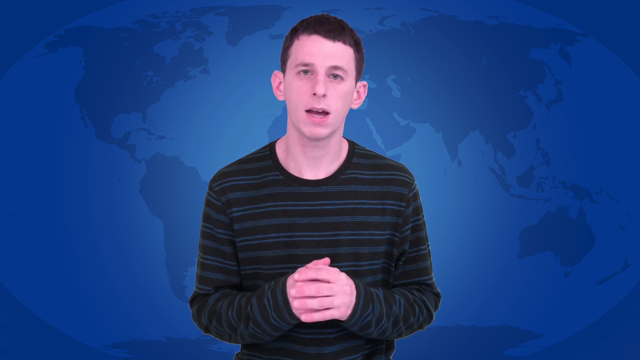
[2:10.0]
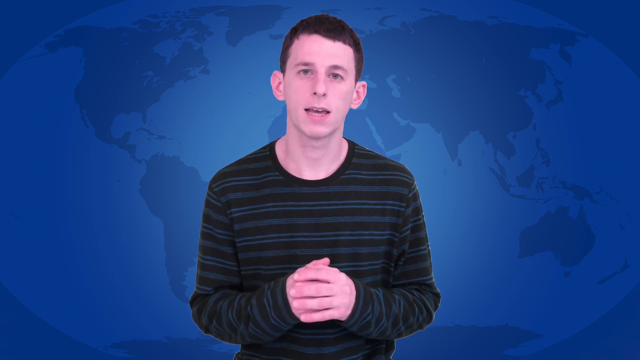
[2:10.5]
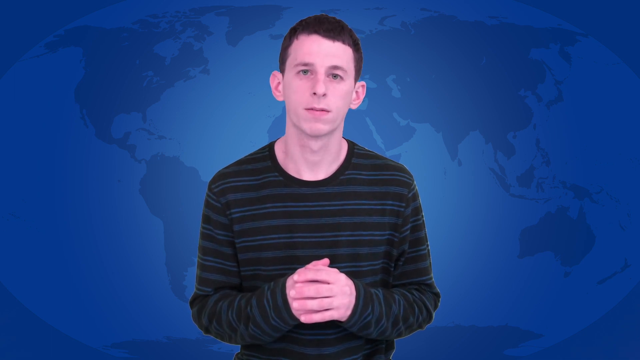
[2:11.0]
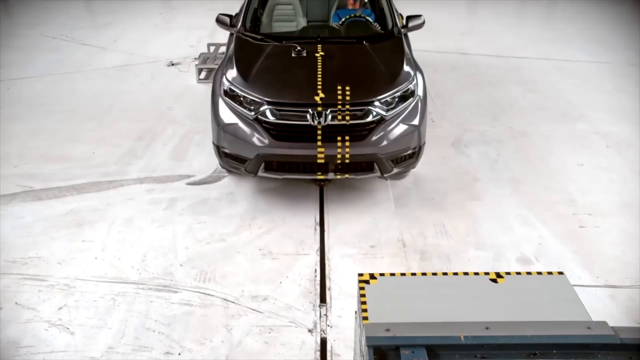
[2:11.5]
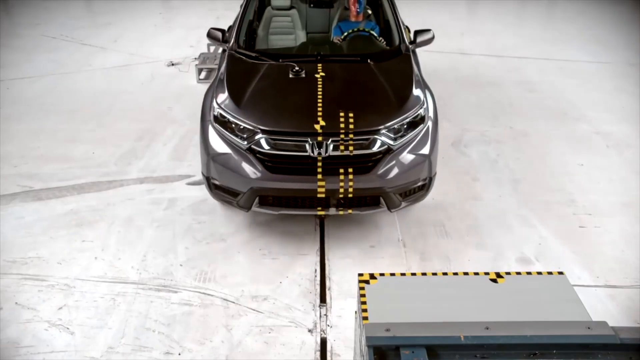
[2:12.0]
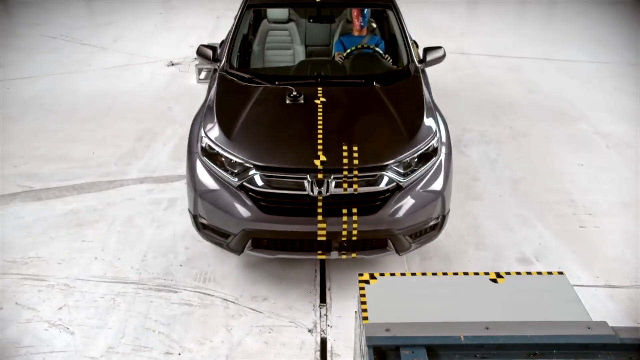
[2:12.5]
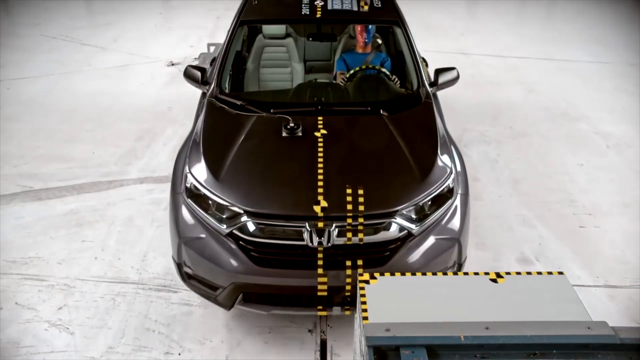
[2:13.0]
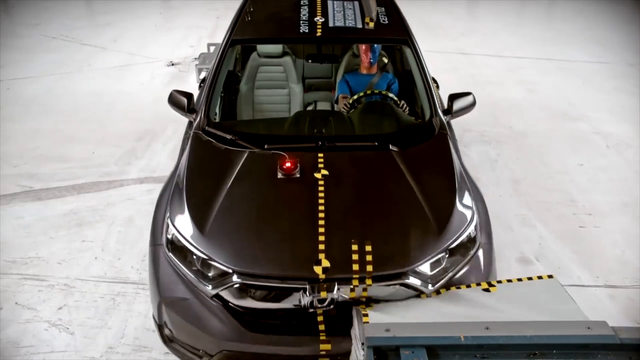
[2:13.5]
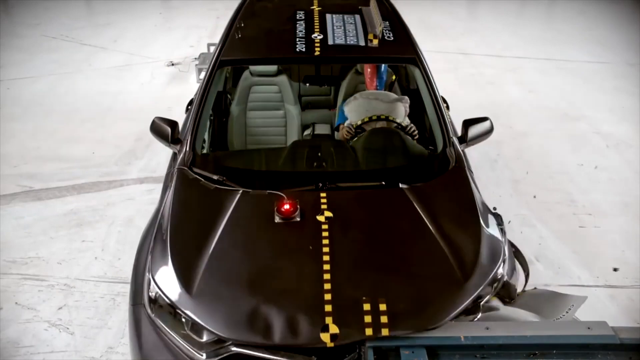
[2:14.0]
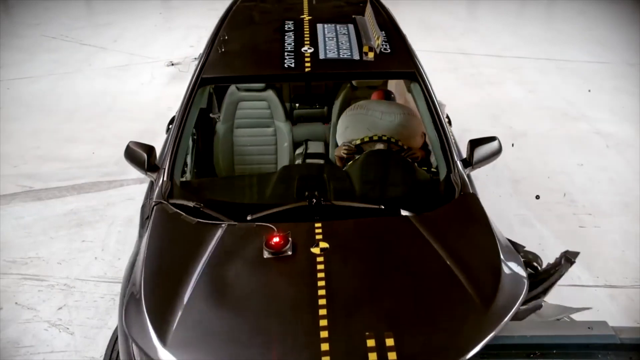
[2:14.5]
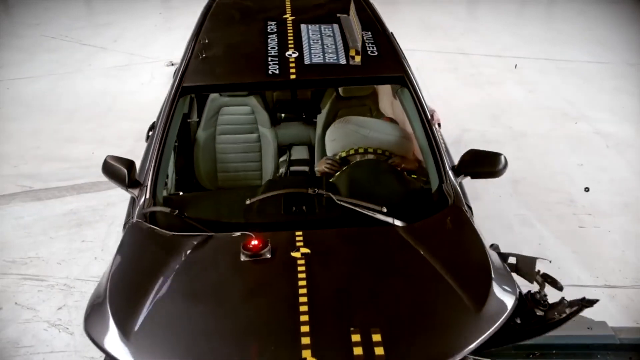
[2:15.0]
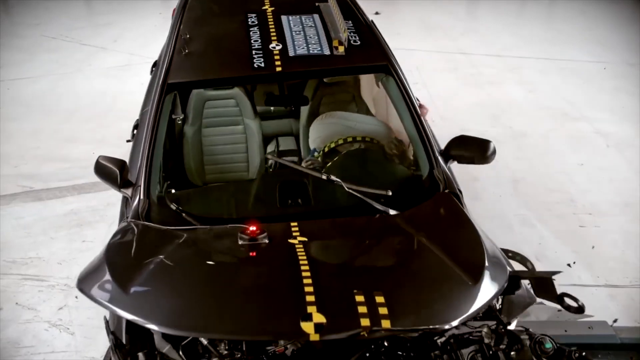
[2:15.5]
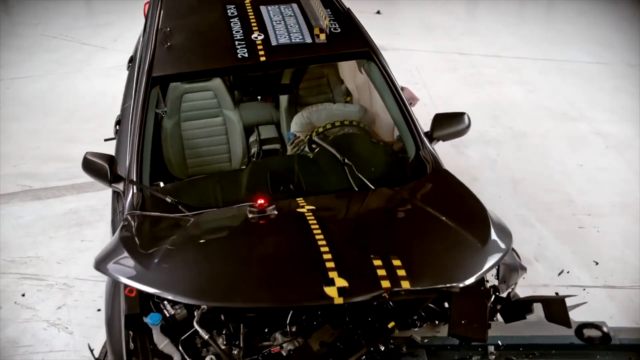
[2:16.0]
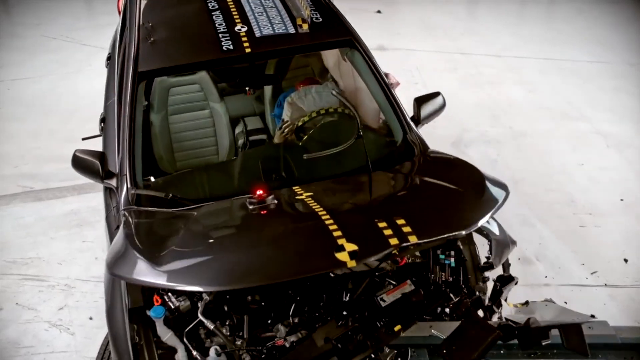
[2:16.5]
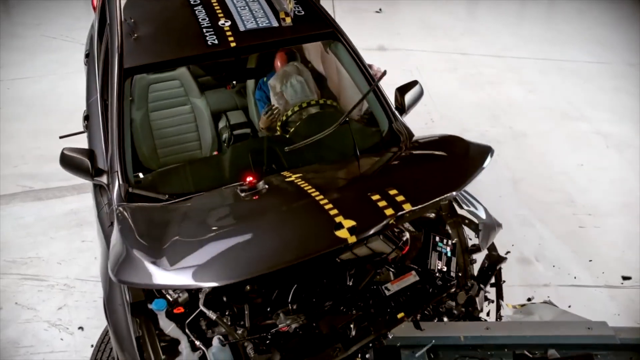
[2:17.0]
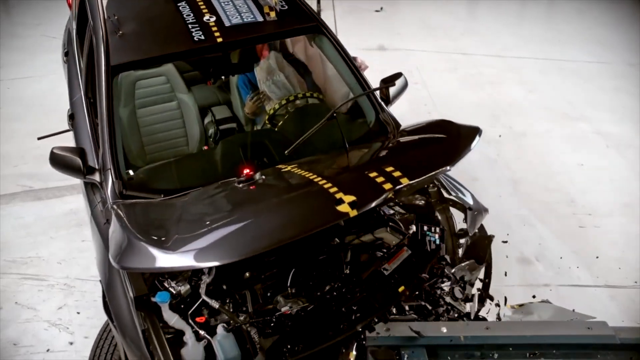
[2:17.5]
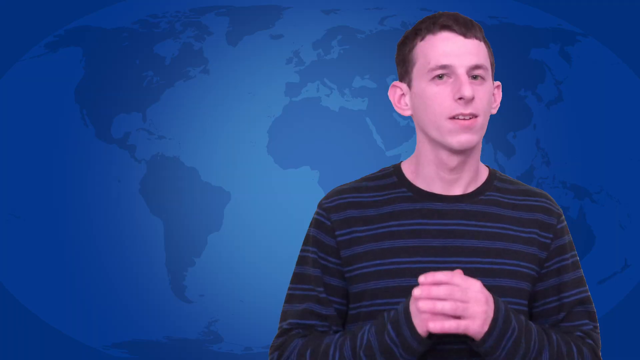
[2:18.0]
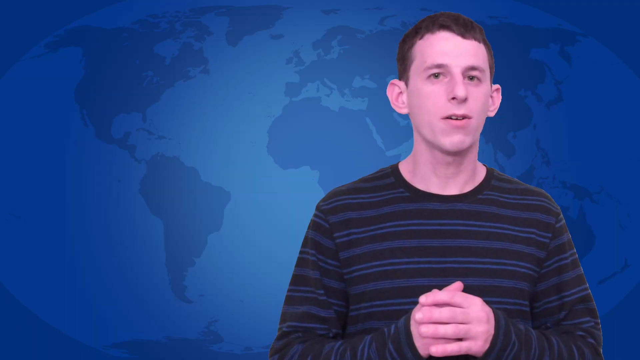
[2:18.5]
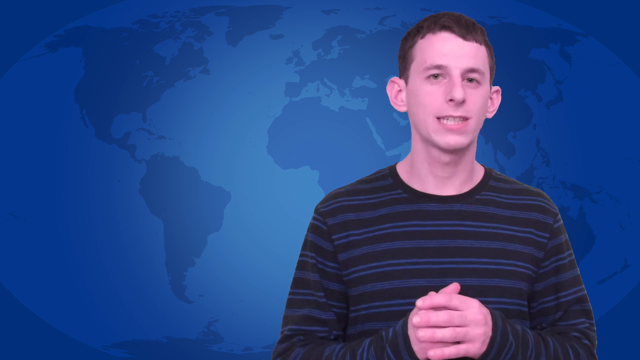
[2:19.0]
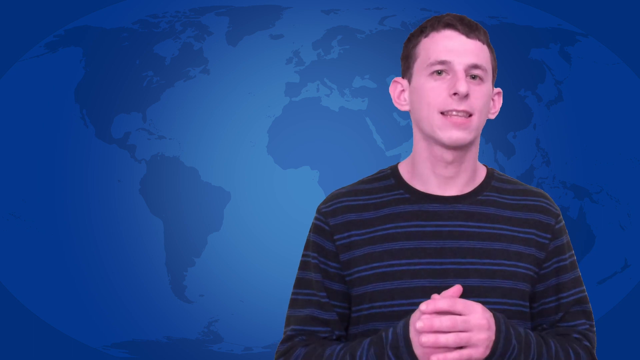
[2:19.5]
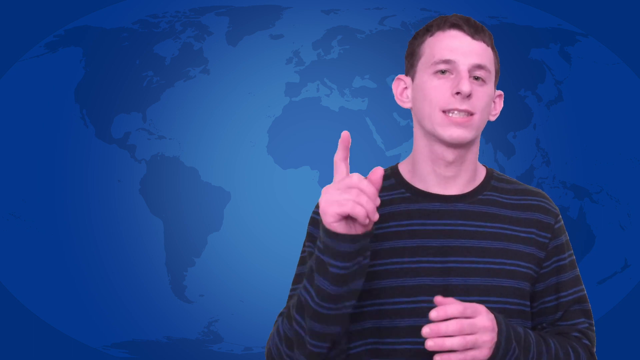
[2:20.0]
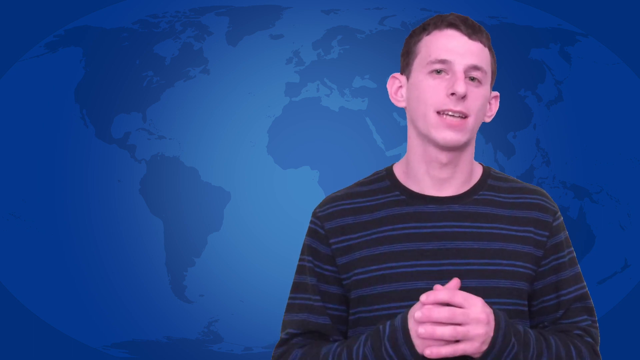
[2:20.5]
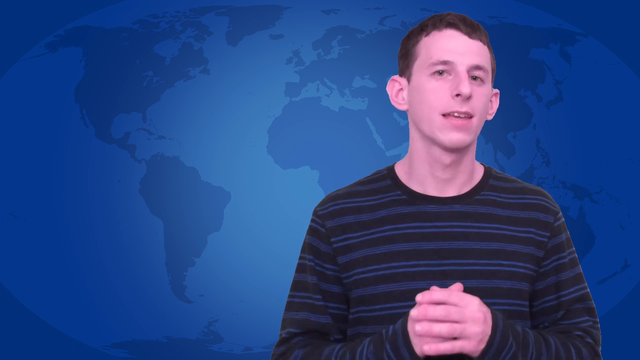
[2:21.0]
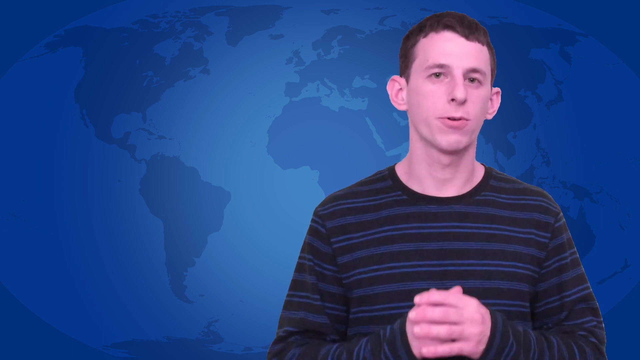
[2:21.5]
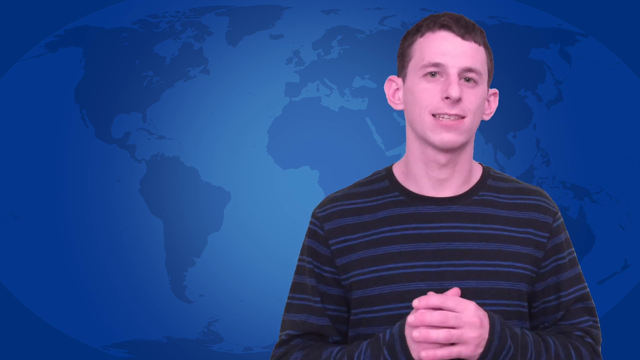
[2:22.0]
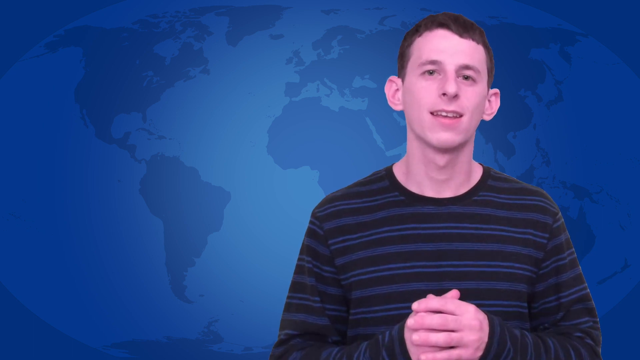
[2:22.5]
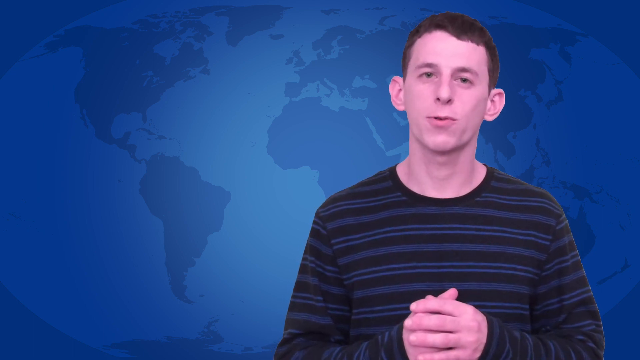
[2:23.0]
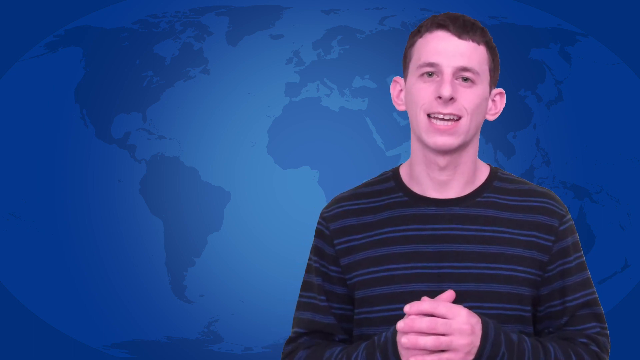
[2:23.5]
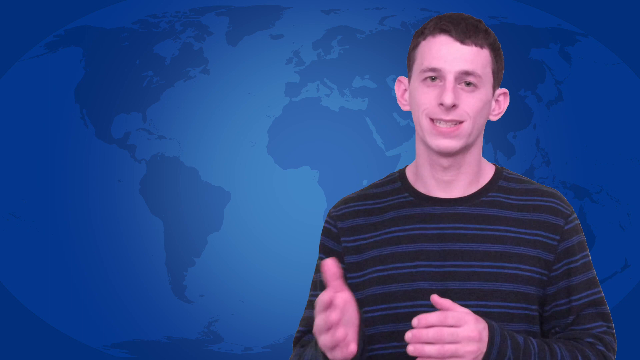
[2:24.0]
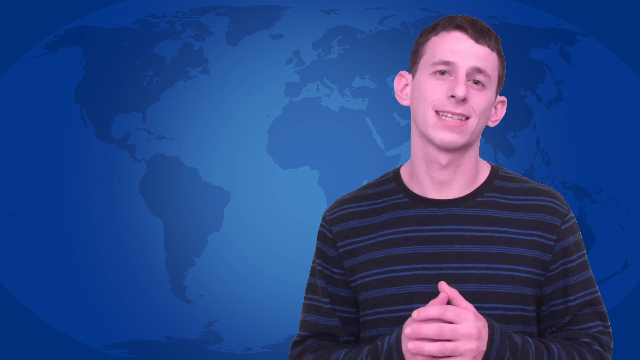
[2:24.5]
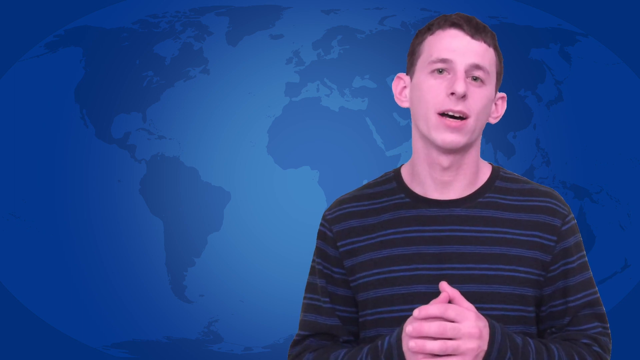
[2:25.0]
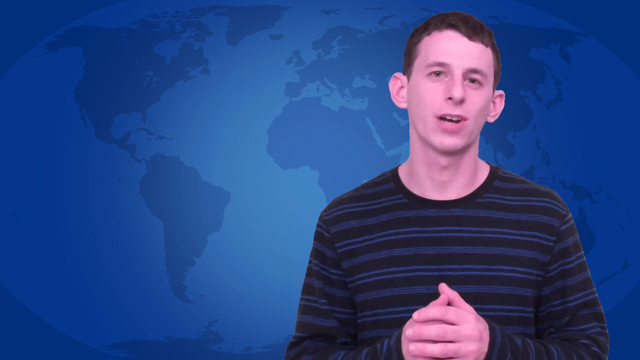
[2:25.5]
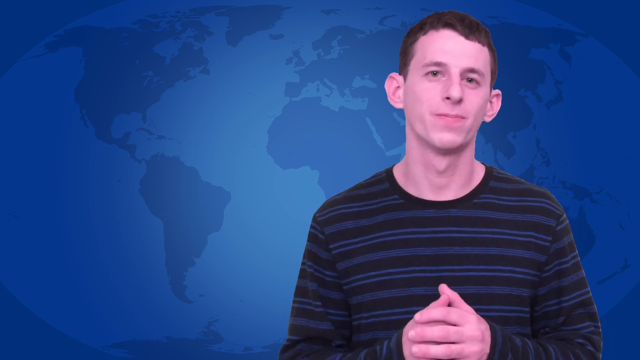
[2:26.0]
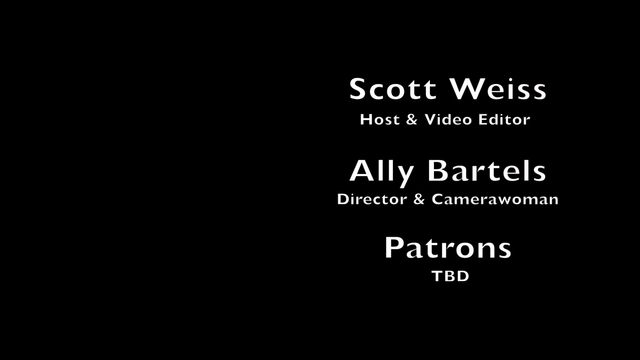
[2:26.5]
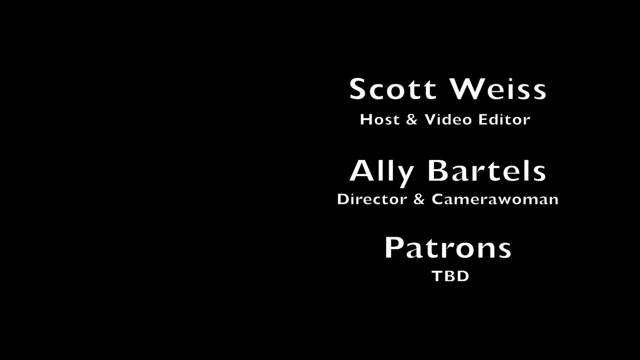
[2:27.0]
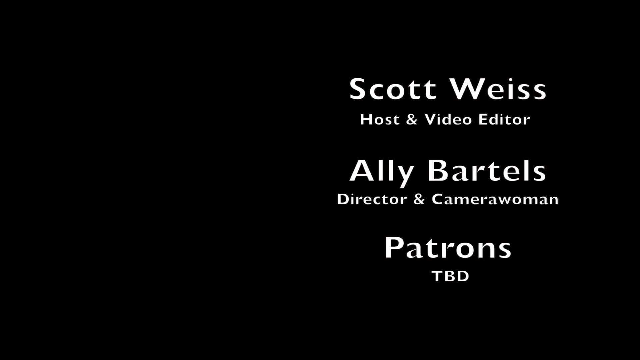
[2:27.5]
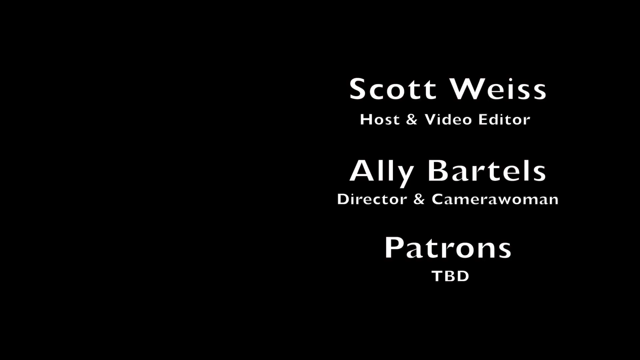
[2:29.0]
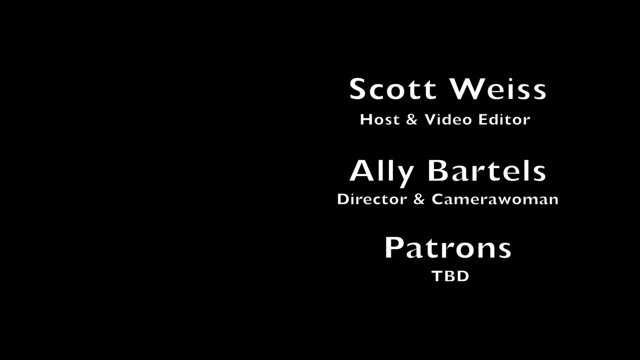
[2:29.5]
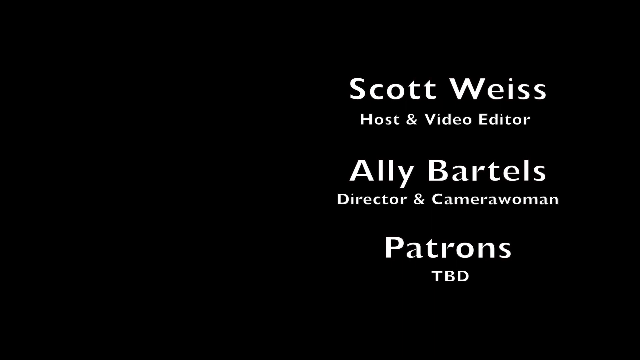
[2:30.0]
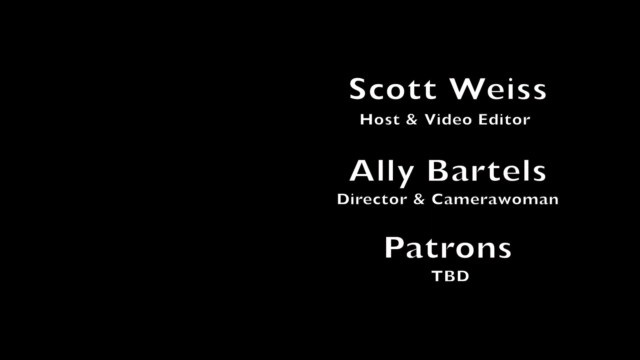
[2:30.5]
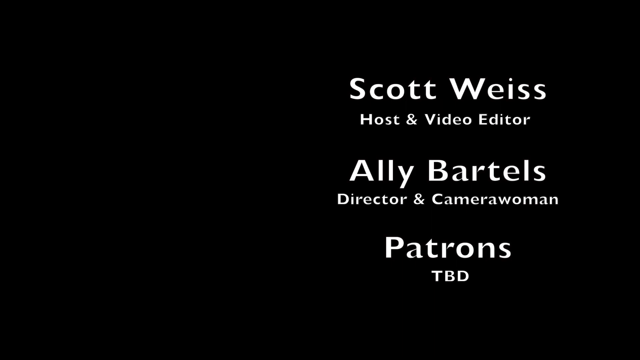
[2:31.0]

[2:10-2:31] The young man talks, and then a crash test with a dummy and a car is shown: the car crashes on one side into a wall and the bag explodes in front of the dummy. The young man talks again, smiling. Credits name Scott Weiss as the host and video editor, Allie Bartels as the director and camera woman, and the patrons as "TBD."